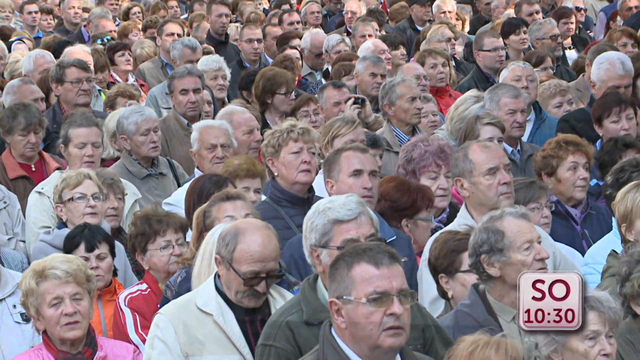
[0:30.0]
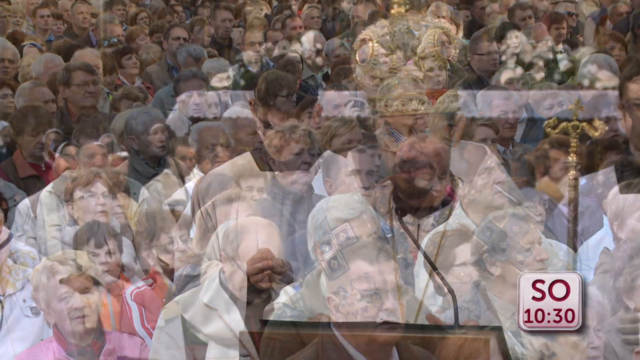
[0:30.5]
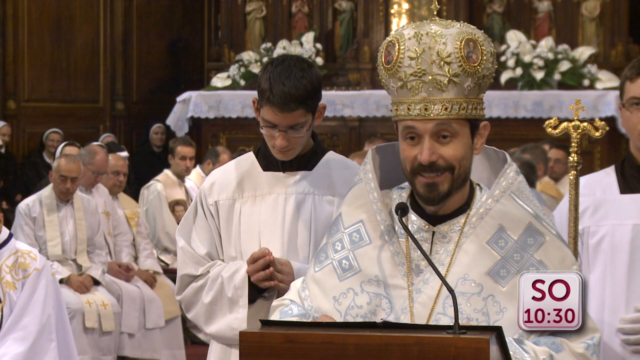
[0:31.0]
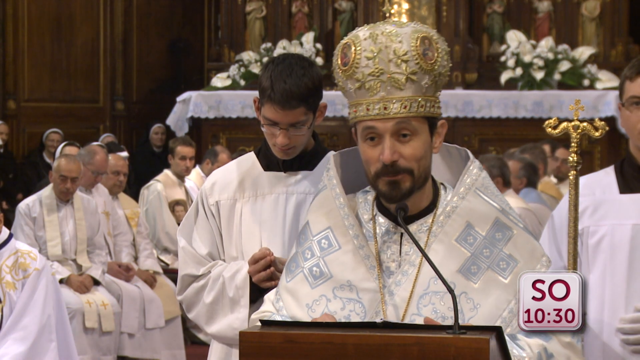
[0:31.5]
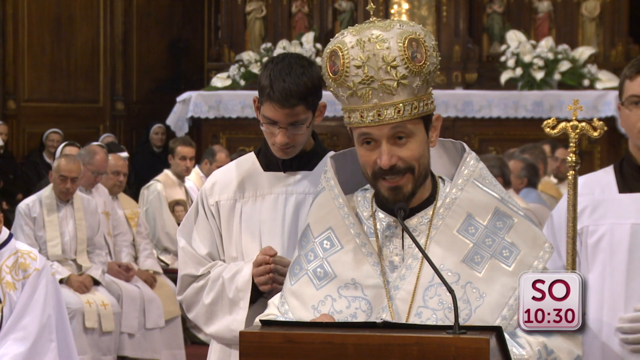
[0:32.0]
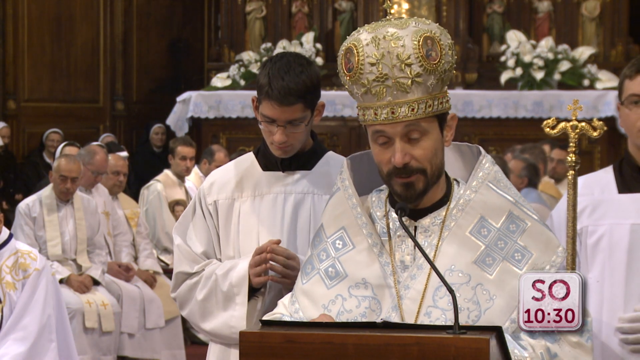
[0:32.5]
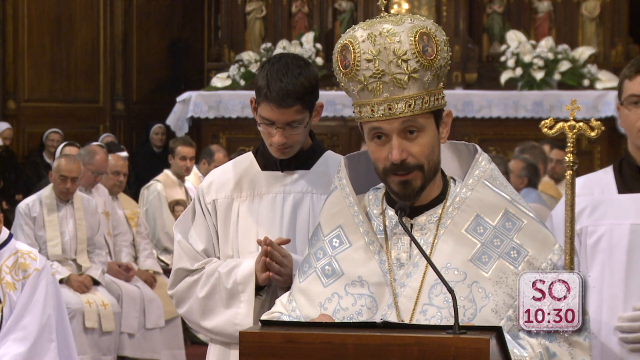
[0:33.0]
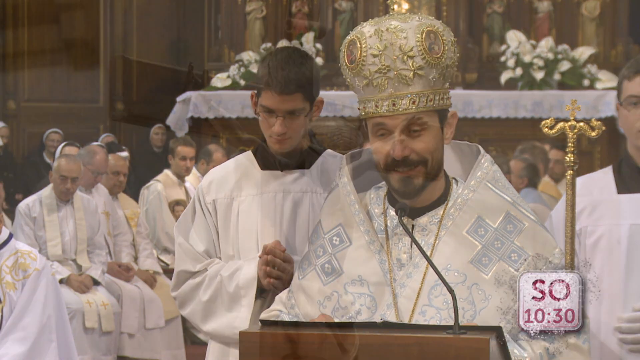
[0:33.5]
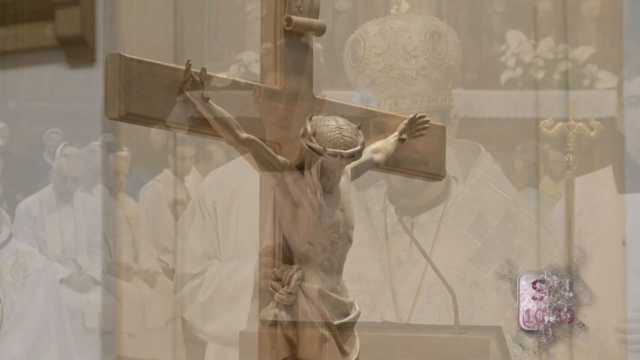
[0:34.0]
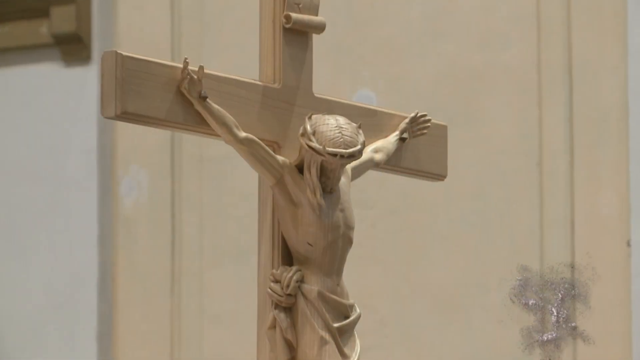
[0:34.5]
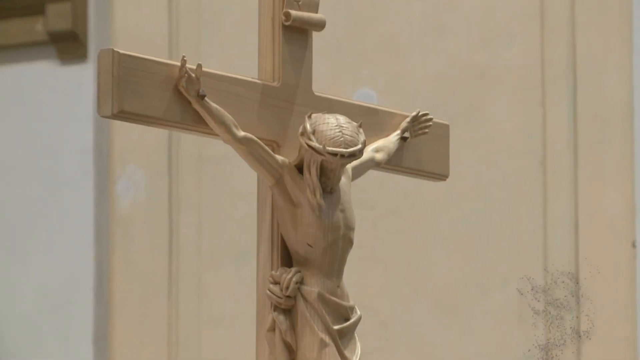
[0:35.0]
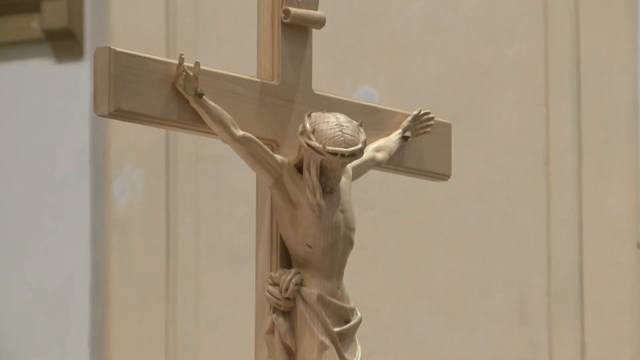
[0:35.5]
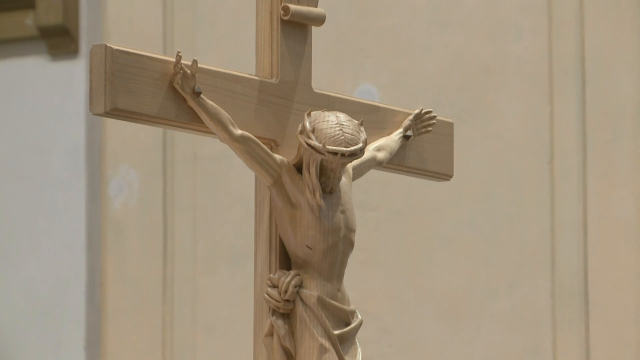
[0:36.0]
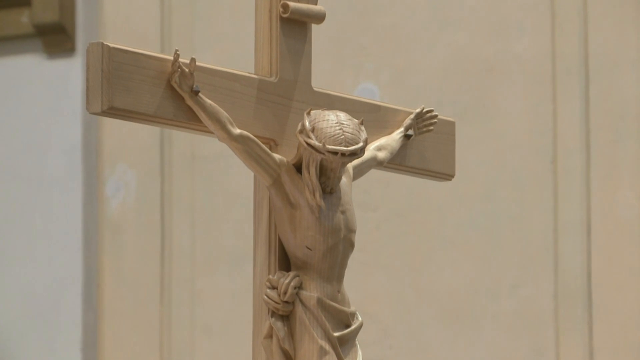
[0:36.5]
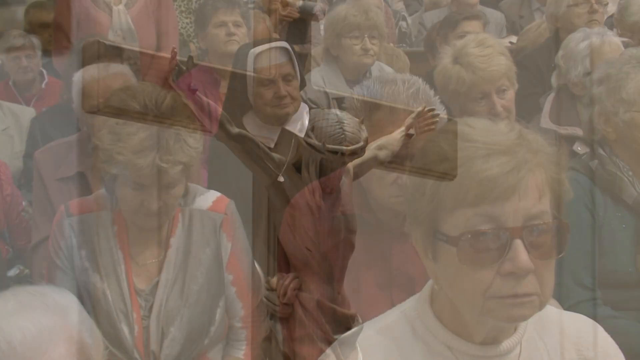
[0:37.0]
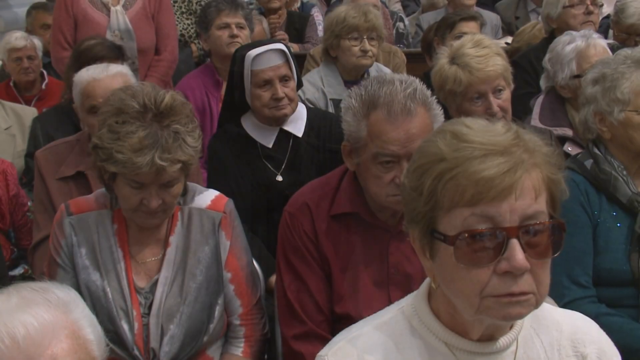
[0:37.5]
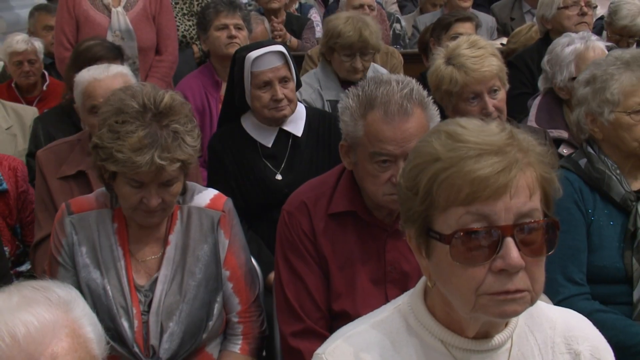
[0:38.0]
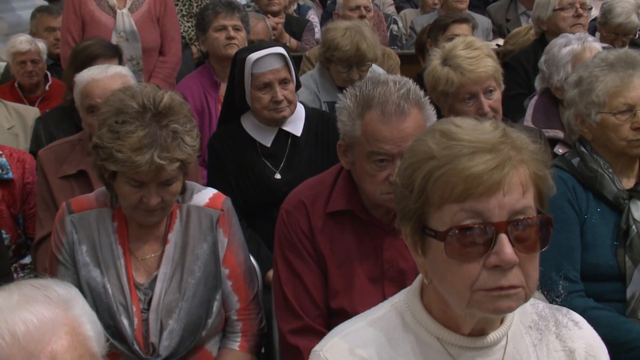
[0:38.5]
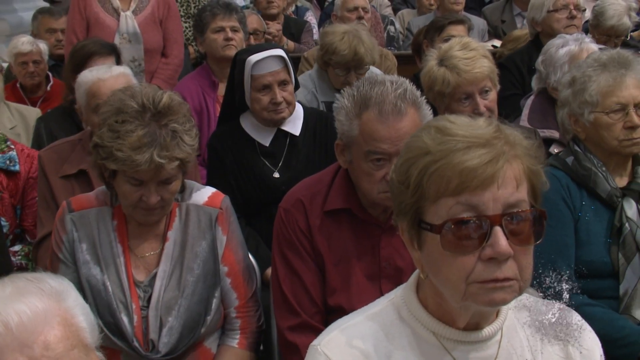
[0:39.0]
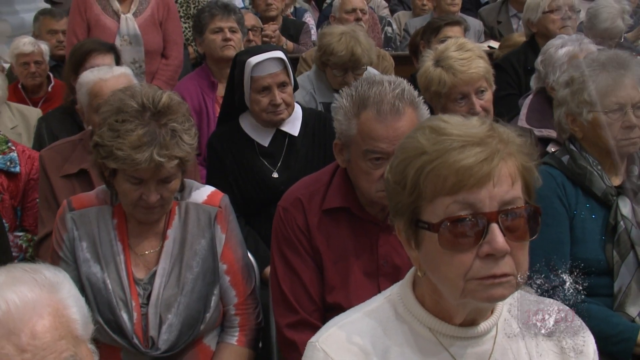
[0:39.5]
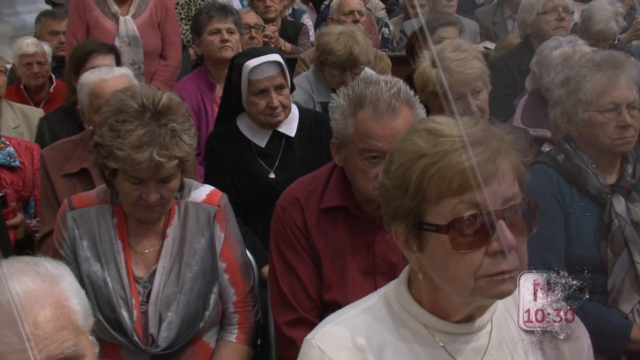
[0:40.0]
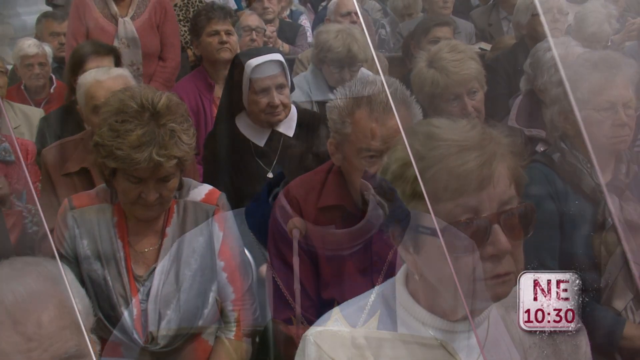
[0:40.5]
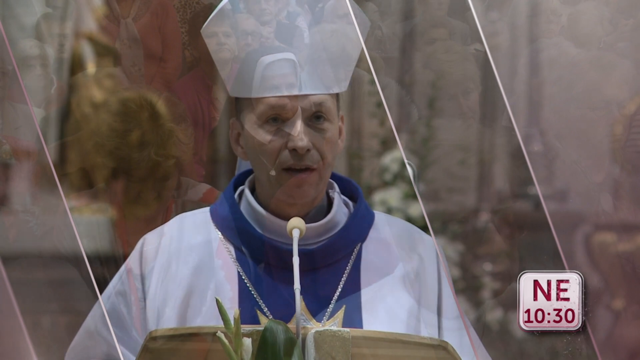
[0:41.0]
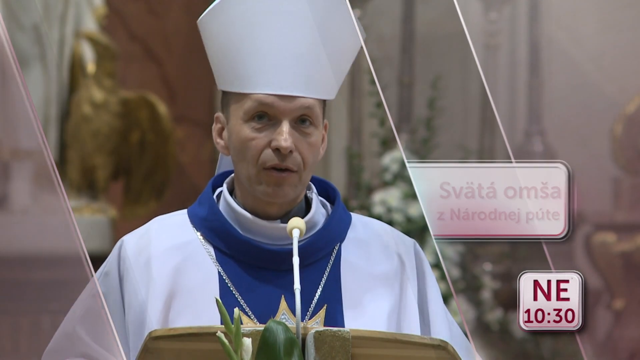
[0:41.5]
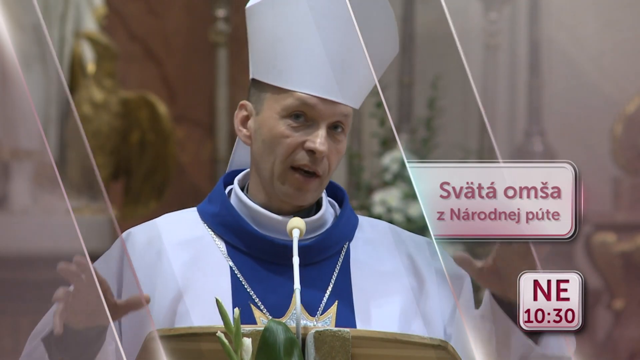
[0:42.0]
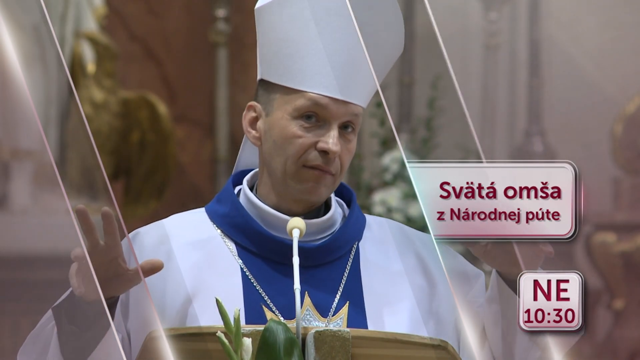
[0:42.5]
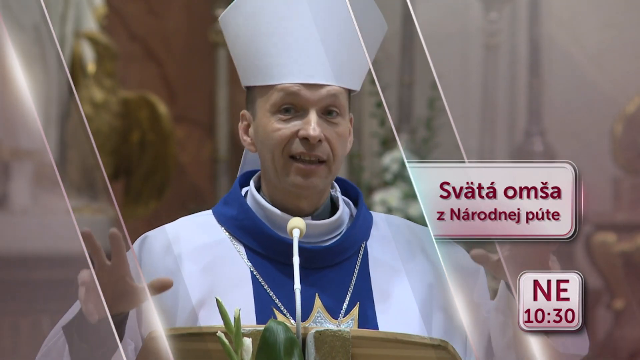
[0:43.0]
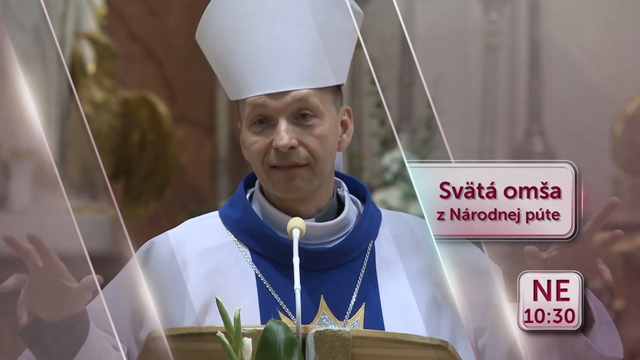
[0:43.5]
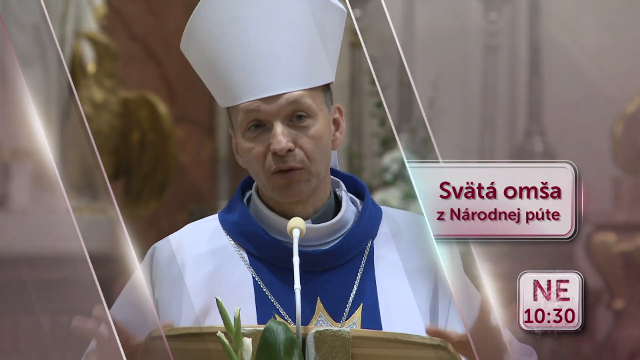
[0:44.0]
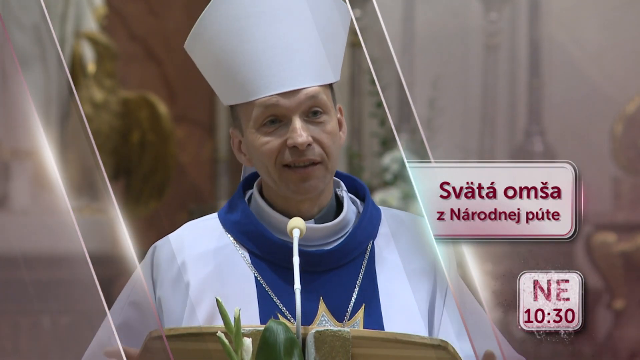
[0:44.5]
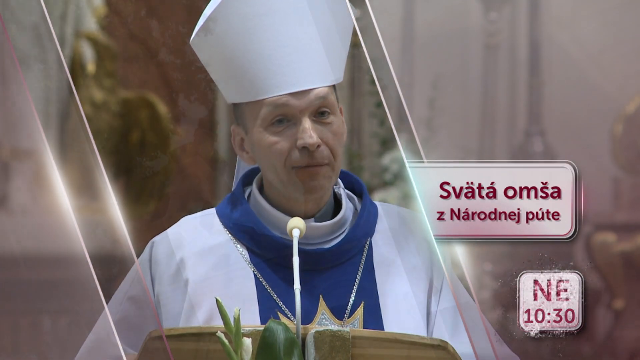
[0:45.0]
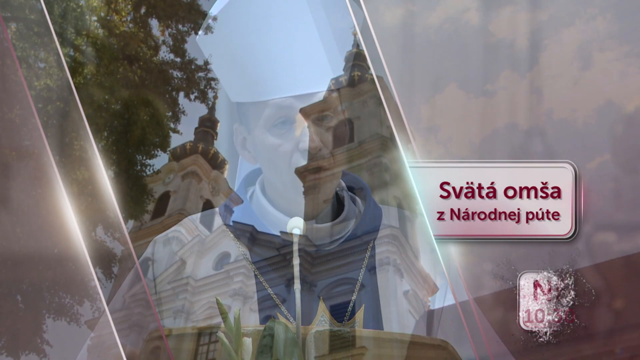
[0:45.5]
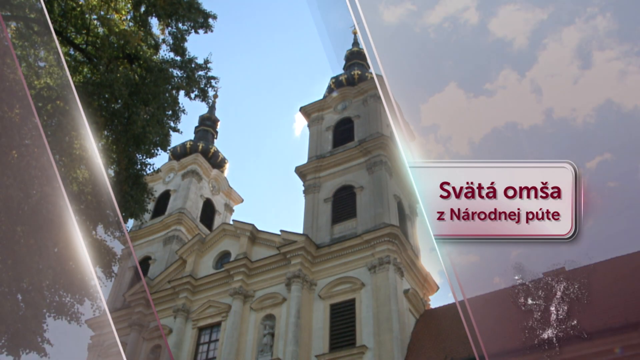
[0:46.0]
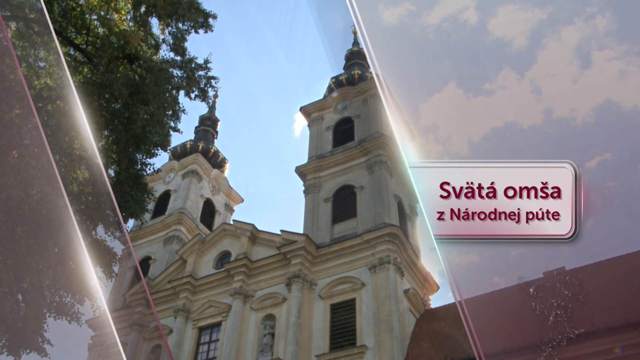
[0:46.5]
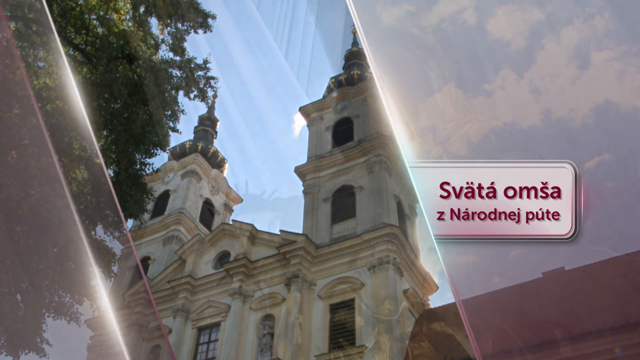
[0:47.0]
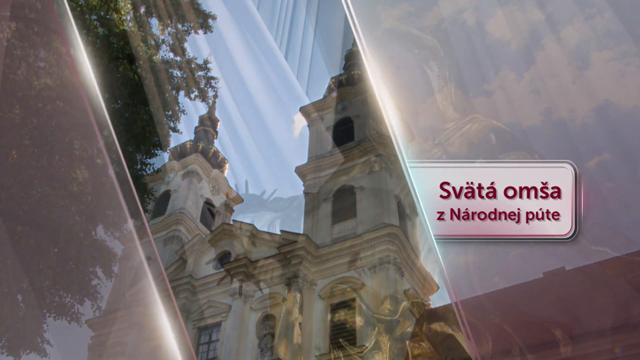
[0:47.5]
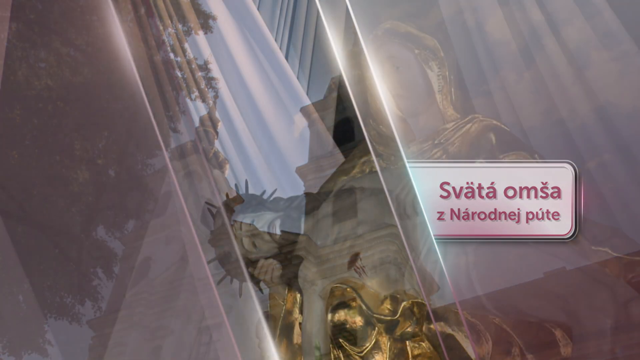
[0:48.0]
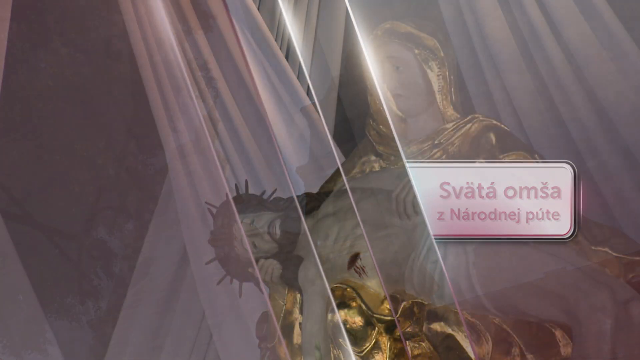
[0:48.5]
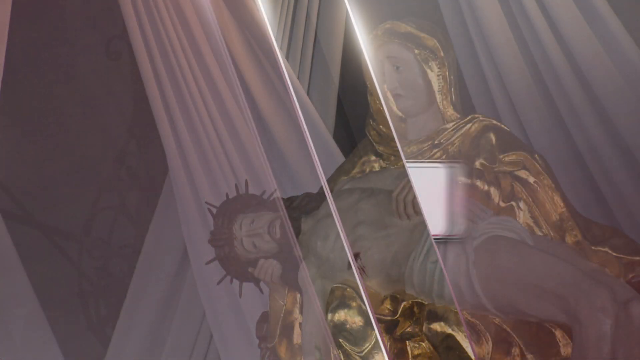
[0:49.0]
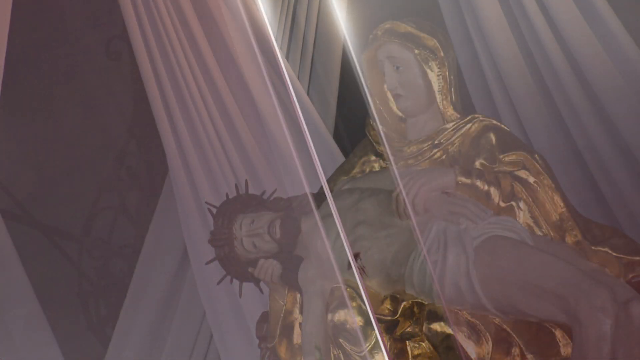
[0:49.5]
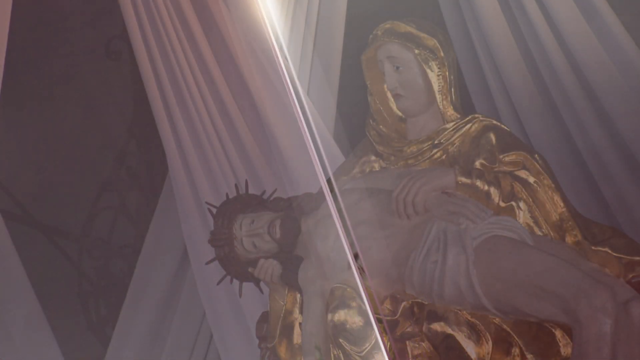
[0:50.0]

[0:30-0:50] The camera shows everybody in the crowd and their faces at what looks like a ceremonial event. A person who appears to be clergy wears a gold hat. A figure of Jesus on a cross appears, and people with glasses on, apparently clergy, are talking, possibly at a mass. Images or statues of figures are shown; one is Jesus, with thorns around his head and a pierced side, while the other figures are unidentified.